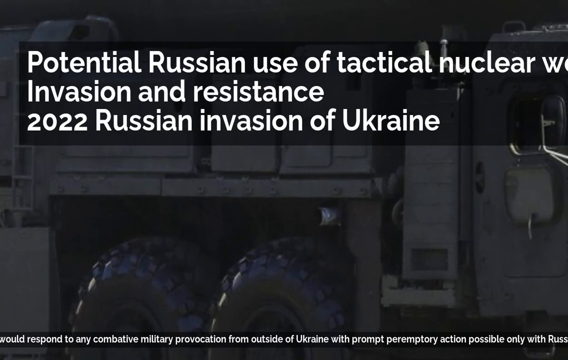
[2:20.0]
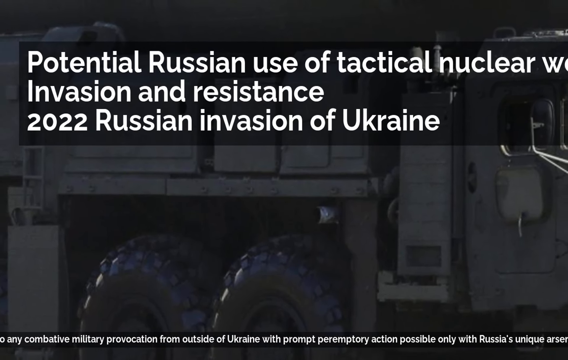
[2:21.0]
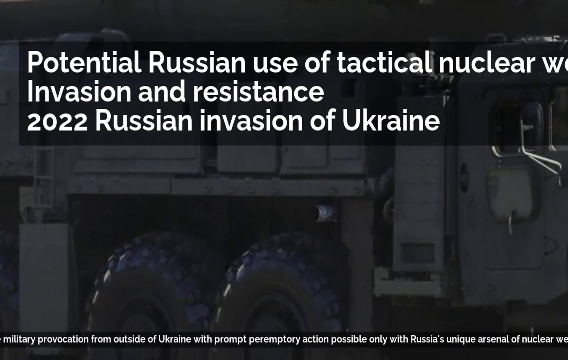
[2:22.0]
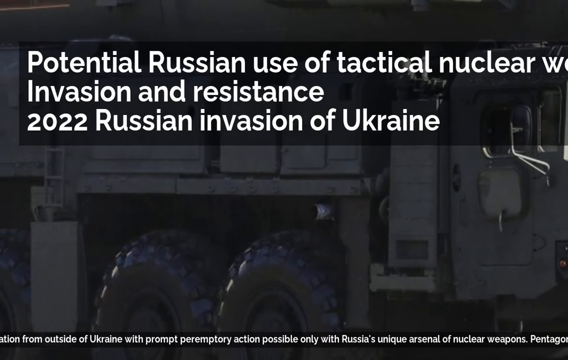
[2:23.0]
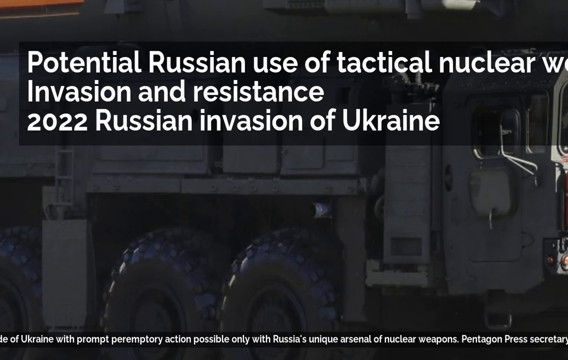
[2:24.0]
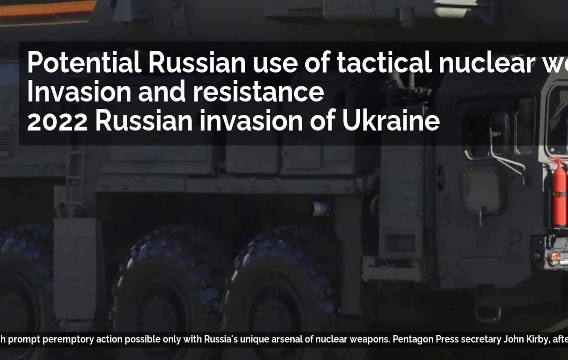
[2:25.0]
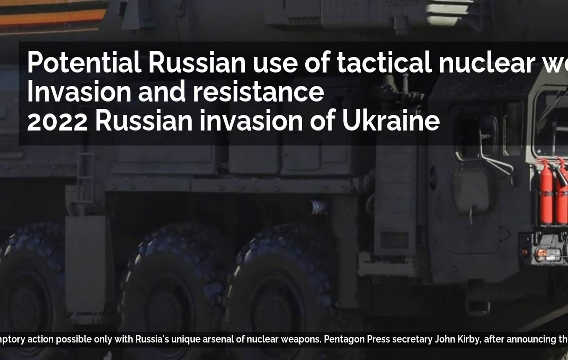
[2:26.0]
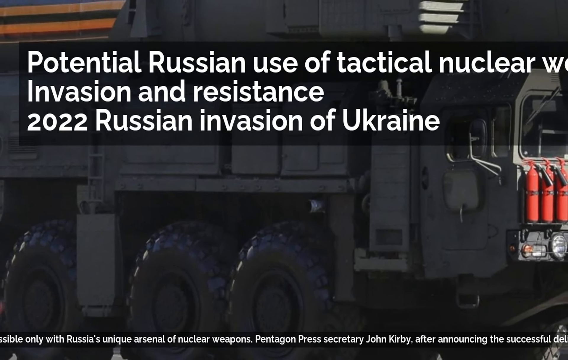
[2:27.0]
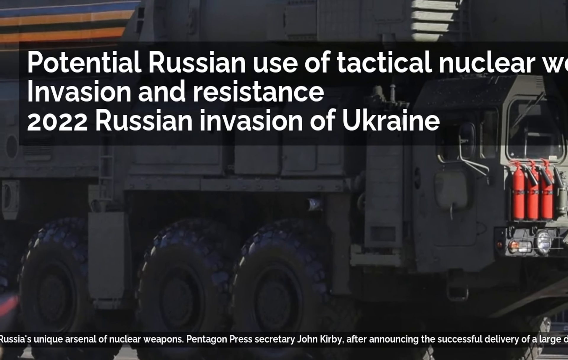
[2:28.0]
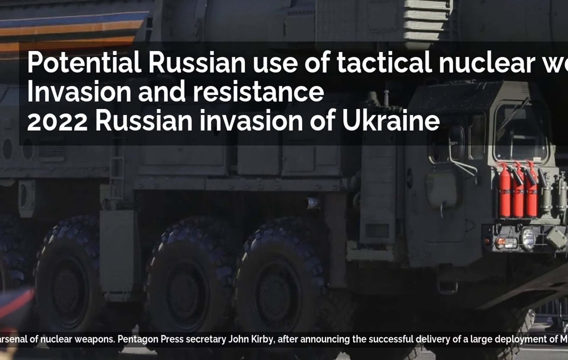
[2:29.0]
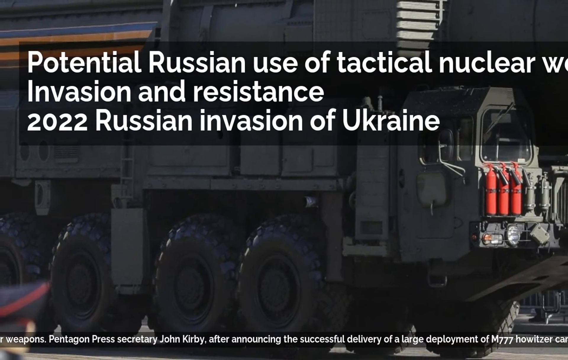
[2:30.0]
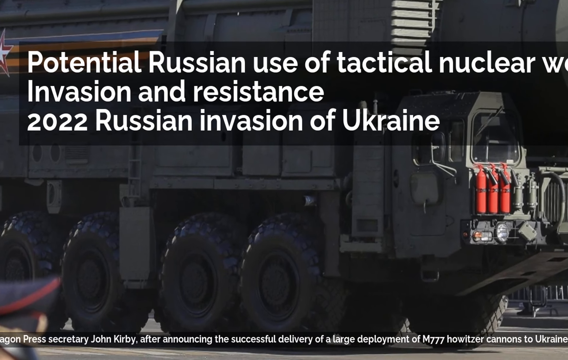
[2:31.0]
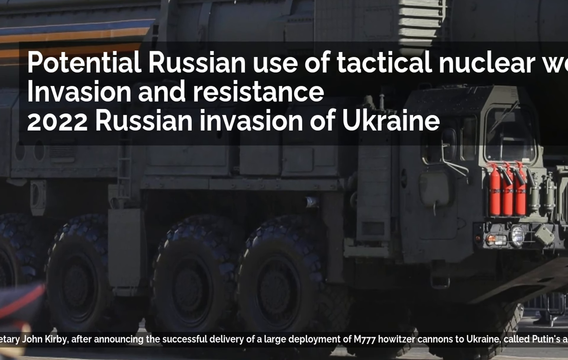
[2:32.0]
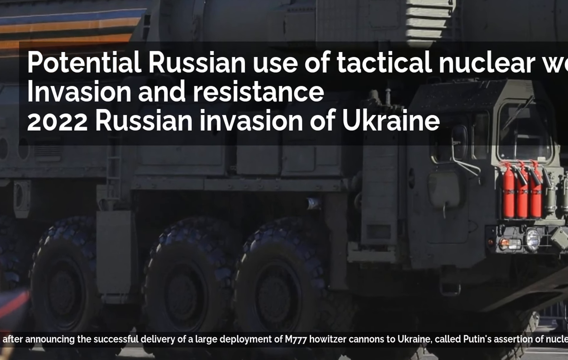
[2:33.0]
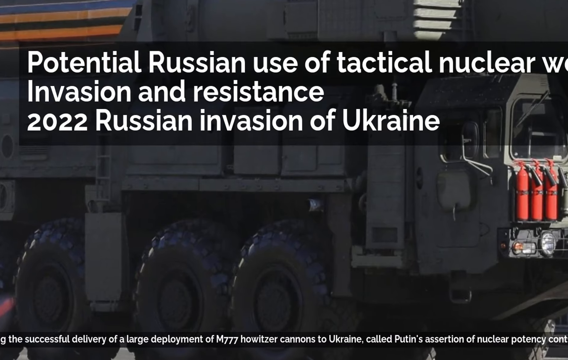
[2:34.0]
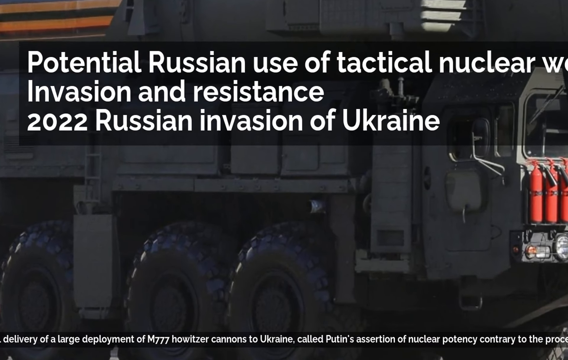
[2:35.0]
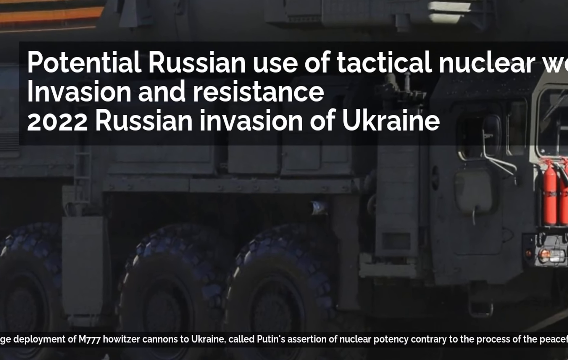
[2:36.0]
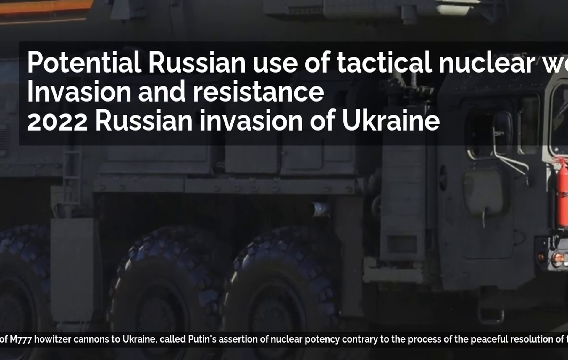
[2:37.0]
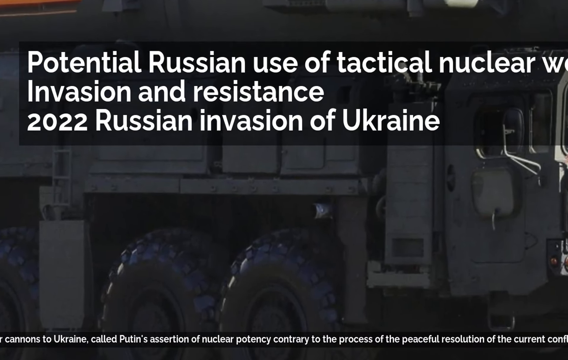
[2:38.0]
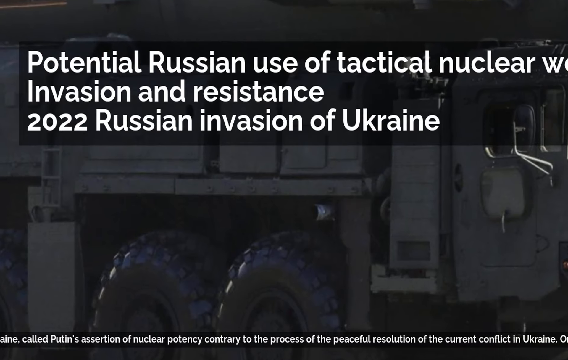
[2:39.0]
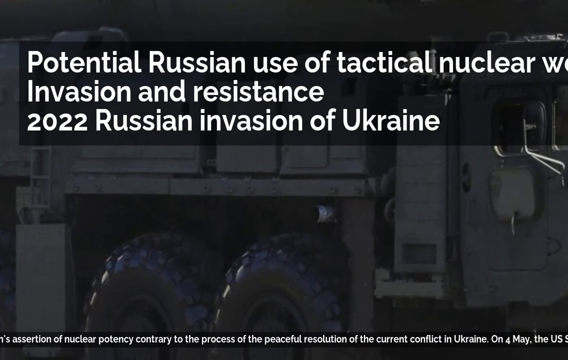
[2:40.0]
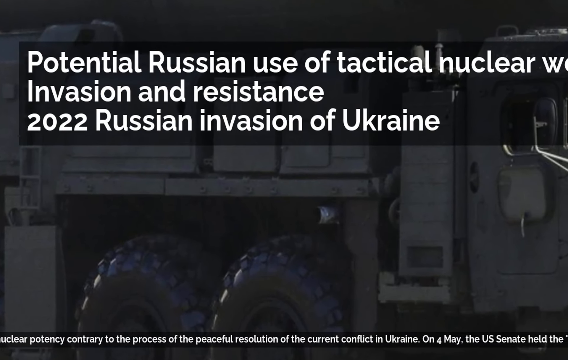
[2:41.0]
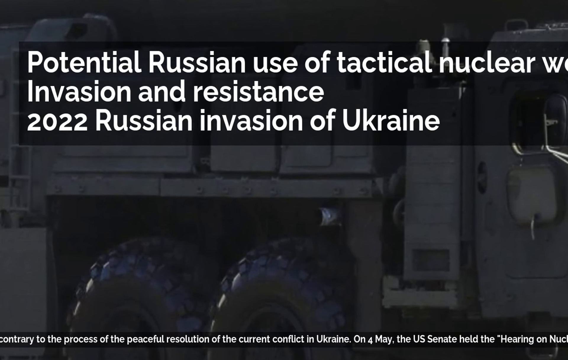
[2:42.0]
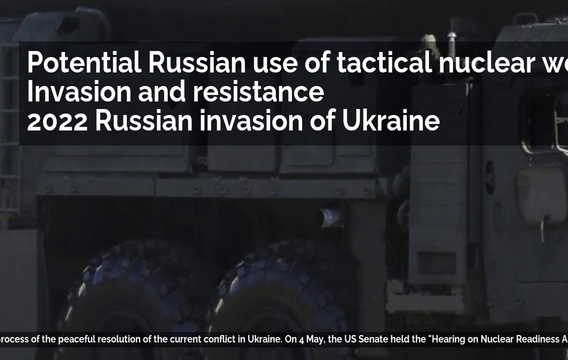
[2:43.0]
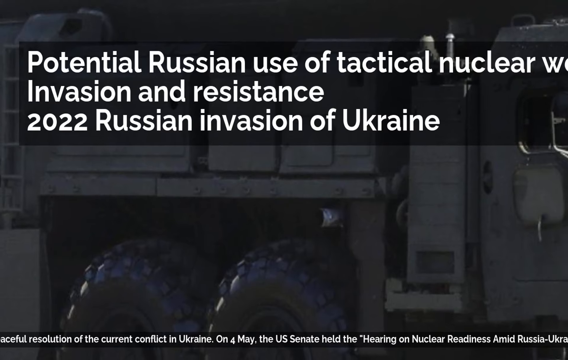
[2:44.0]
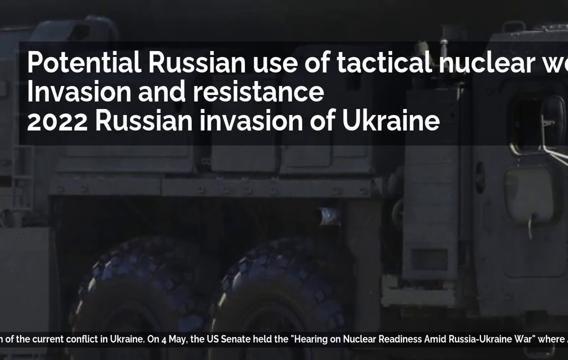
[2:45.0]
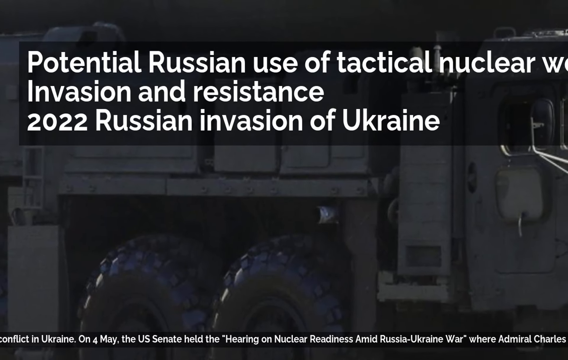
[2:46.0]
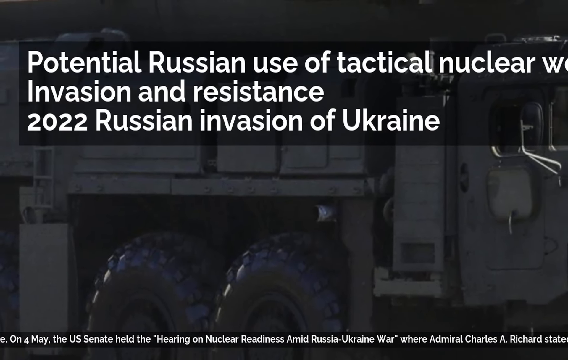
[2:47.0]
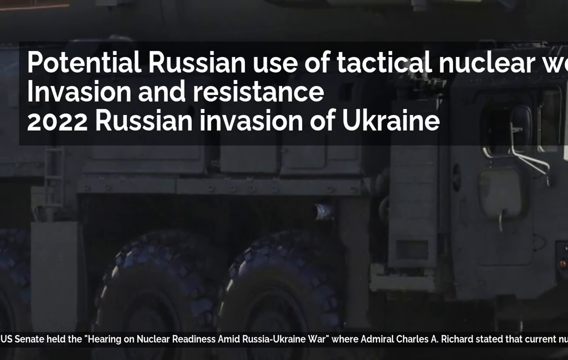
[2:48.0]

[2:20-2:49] The static image of the gray armored Russian military vehicle continues, with the video zooming in and out on it. The only movement on screen is the ribbon text at the bottom, which reads "that would respond to any combative military provocation from outside of Ukraine with prompt preemptory action possible only with Russia's unique arsenal of nuclear weapons. Pentagon Press Secretary, John Kirby, after announcing the successful delivery of a large deployment of M777 howitzer cannons to Ukraine, called Putin's assertion of nuclear potency contrary to the process of the peaceful resolution of the current conflict in Ukraine. On the 4th of May, the U.S. Senate held the hearing of nuclear readiness amid Russia-Ukraine", followed by "where Admiral Charles A. Richard stated that current nuclear".